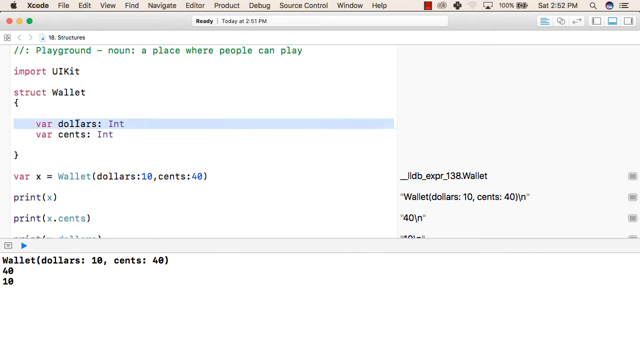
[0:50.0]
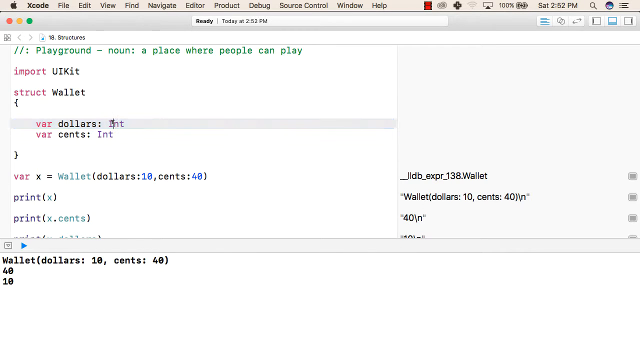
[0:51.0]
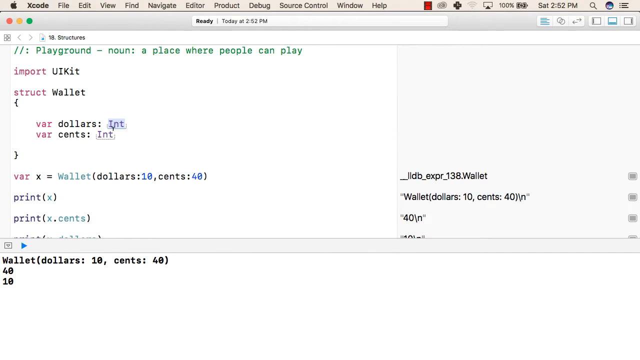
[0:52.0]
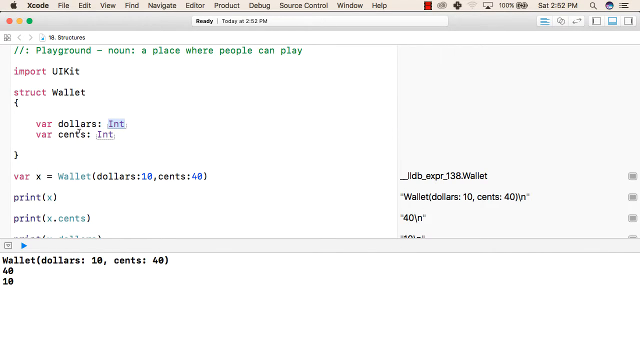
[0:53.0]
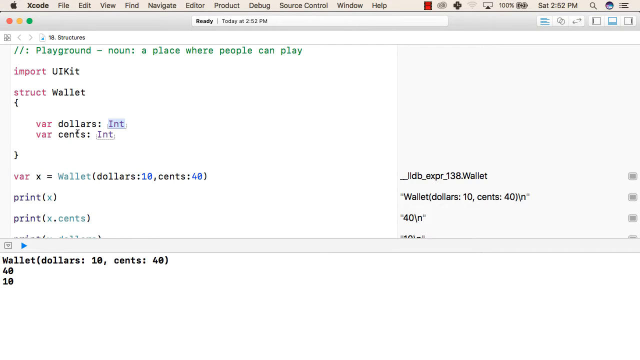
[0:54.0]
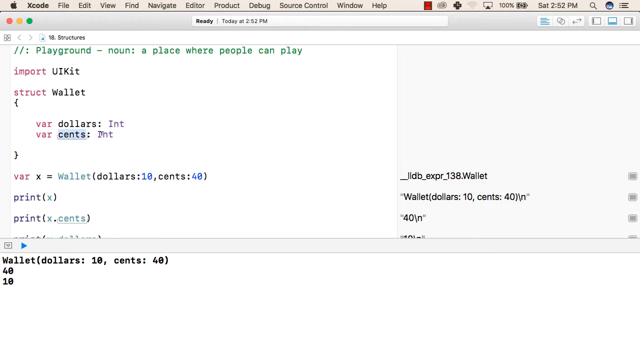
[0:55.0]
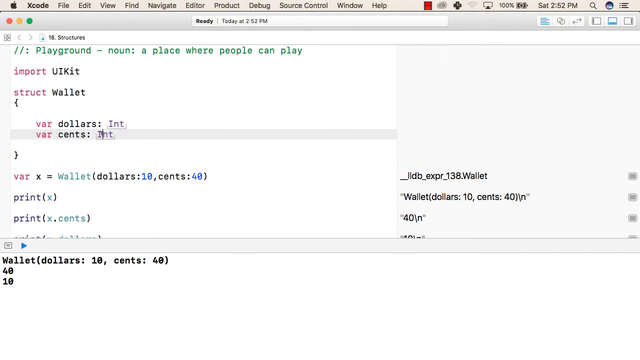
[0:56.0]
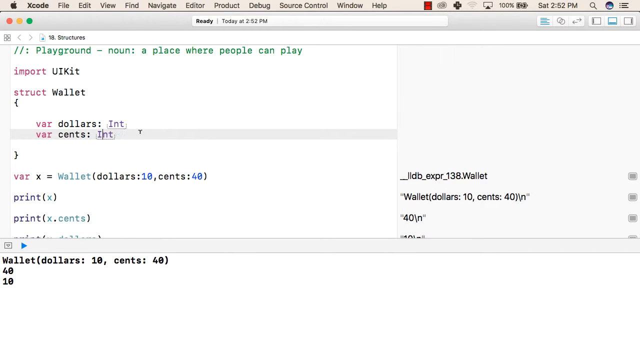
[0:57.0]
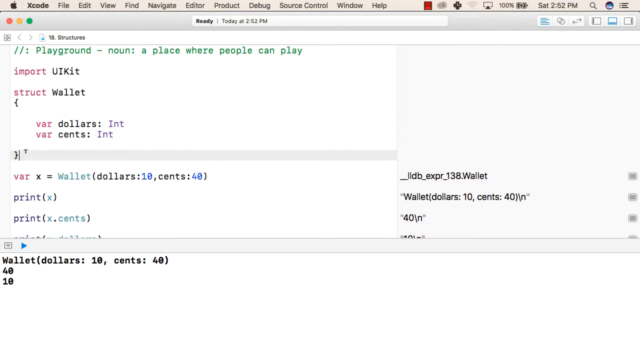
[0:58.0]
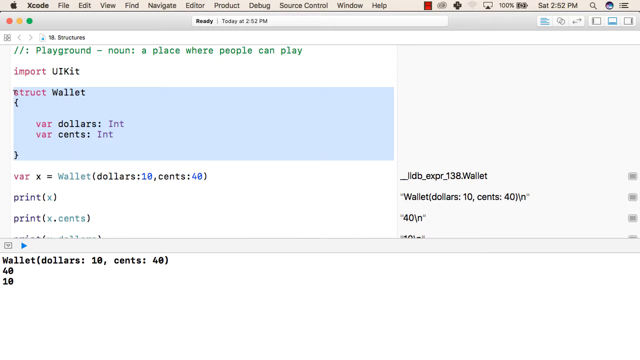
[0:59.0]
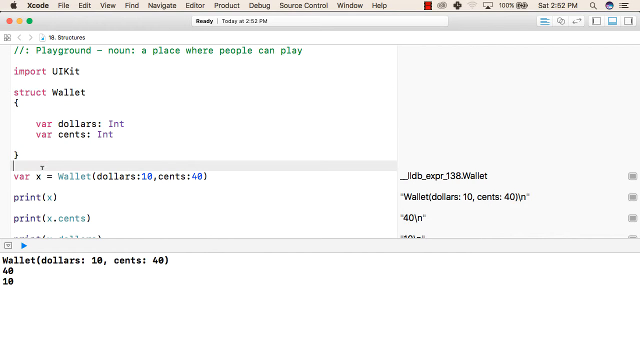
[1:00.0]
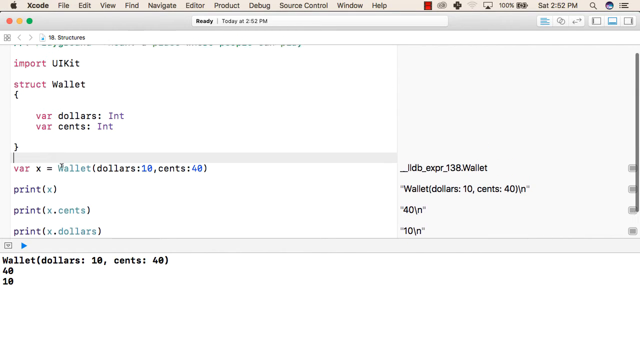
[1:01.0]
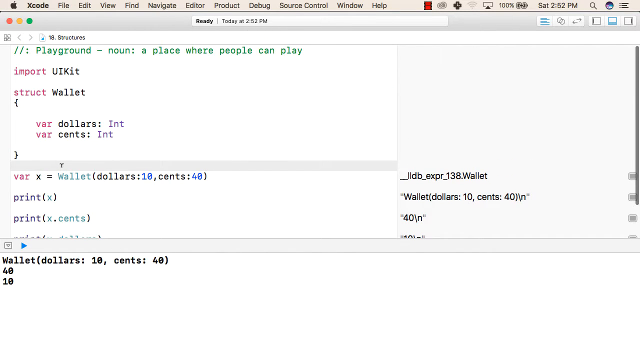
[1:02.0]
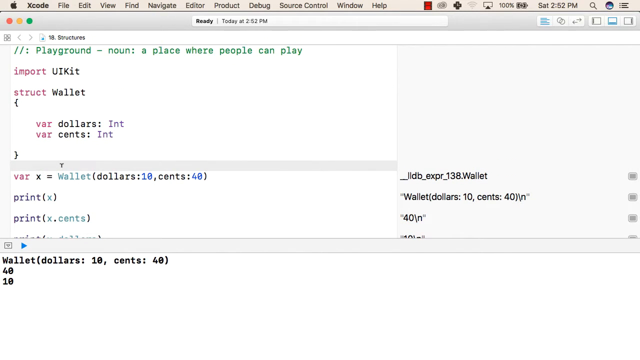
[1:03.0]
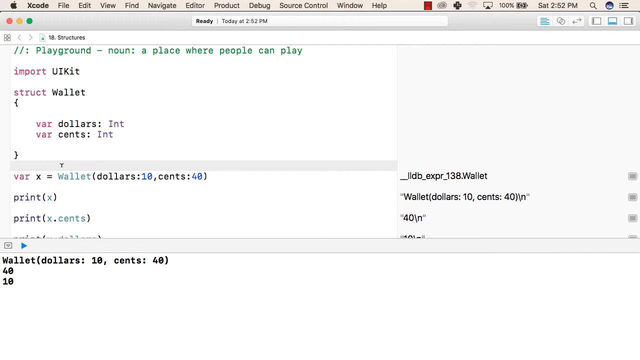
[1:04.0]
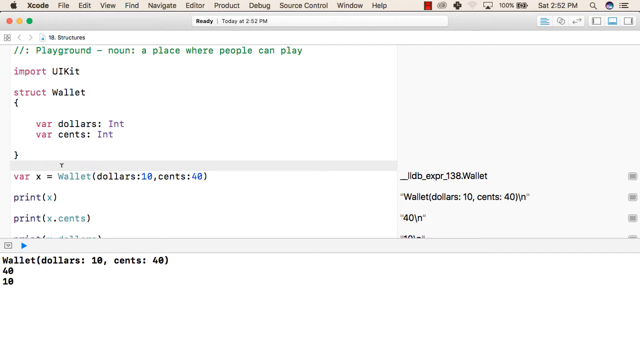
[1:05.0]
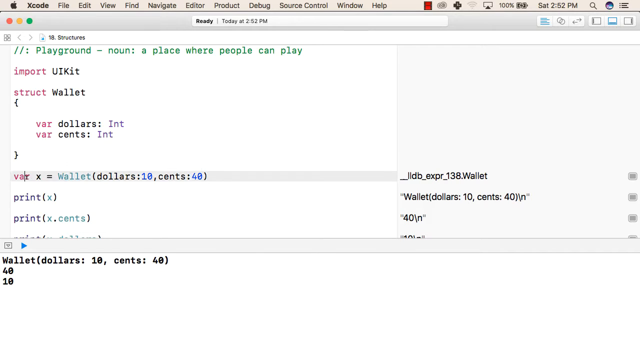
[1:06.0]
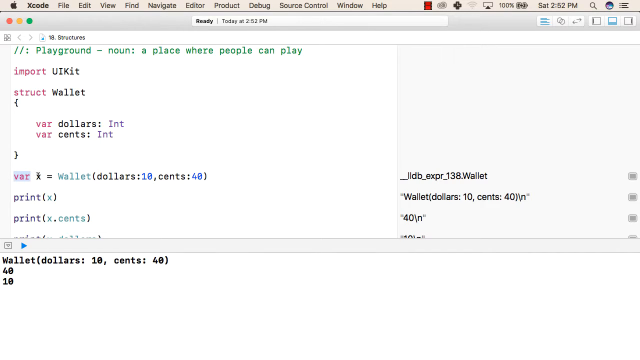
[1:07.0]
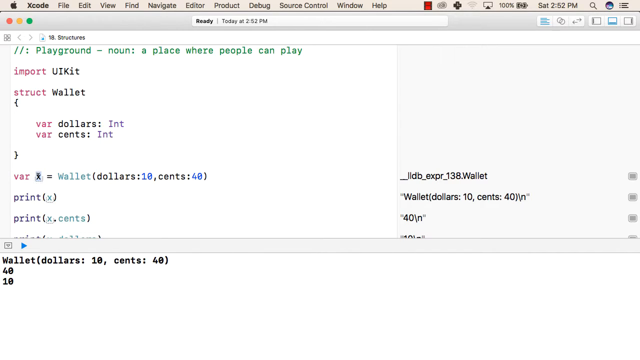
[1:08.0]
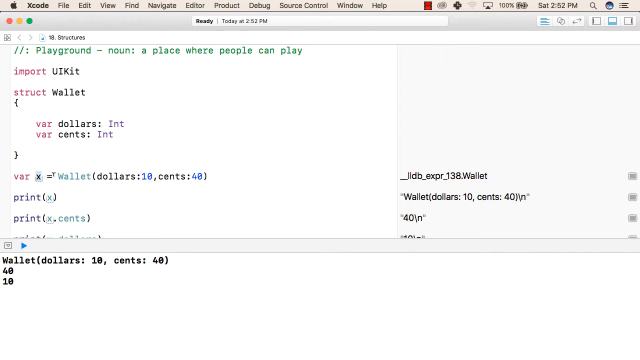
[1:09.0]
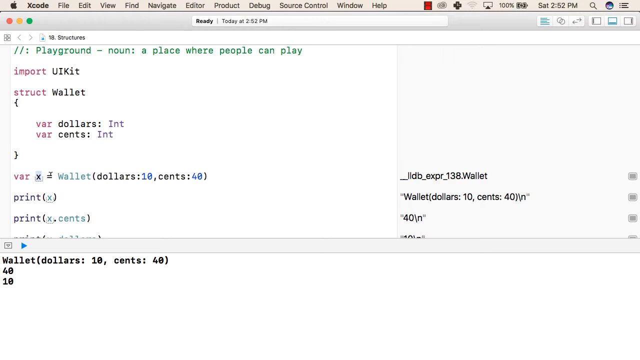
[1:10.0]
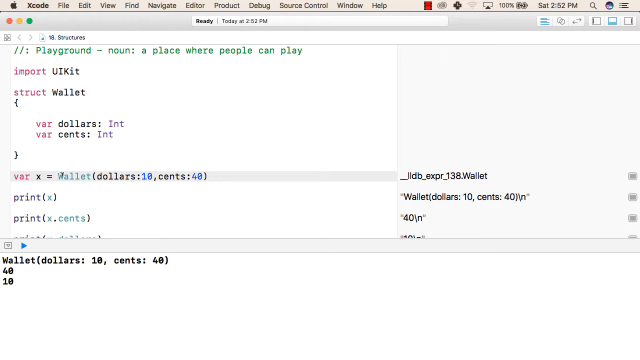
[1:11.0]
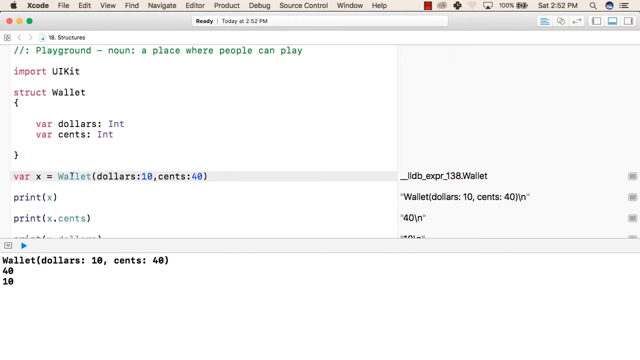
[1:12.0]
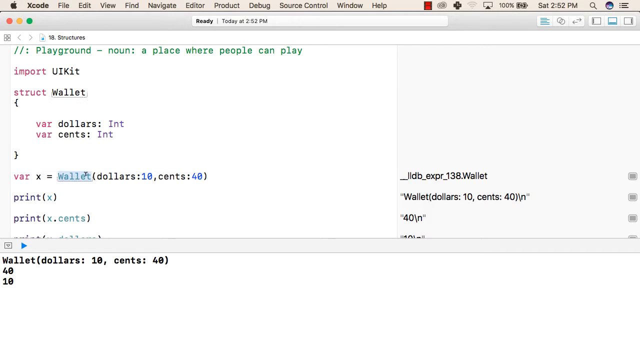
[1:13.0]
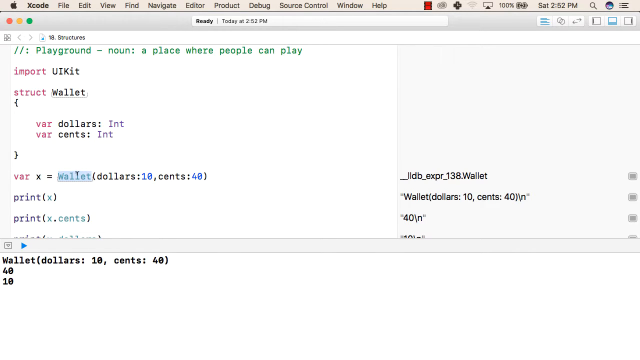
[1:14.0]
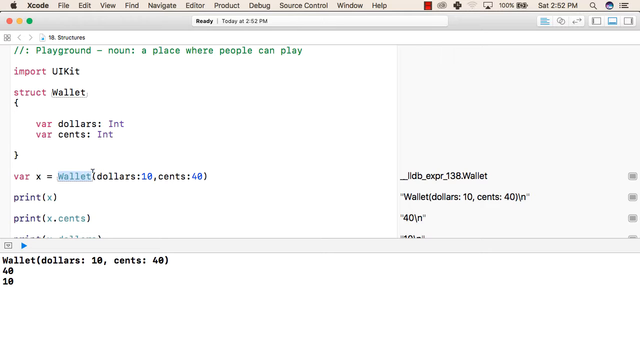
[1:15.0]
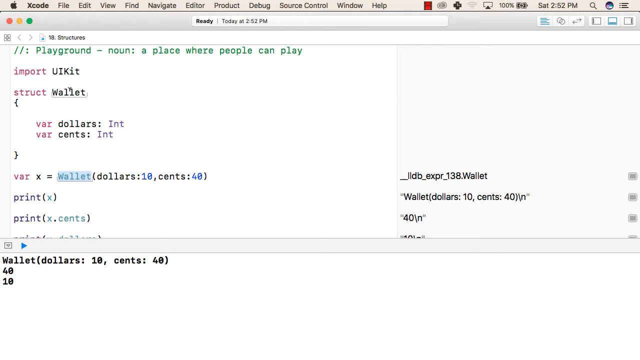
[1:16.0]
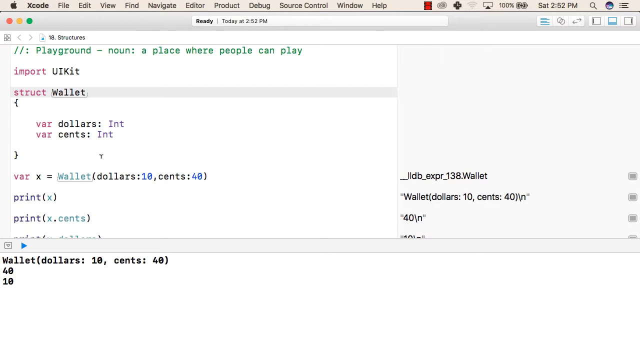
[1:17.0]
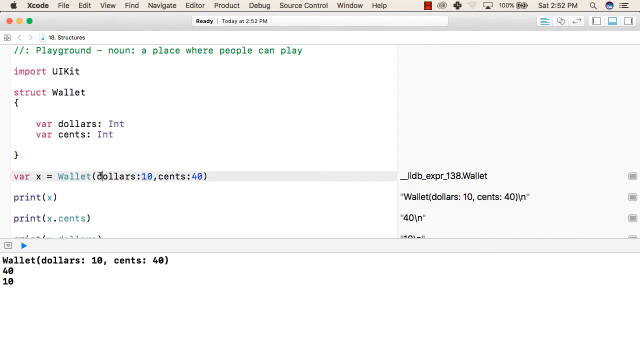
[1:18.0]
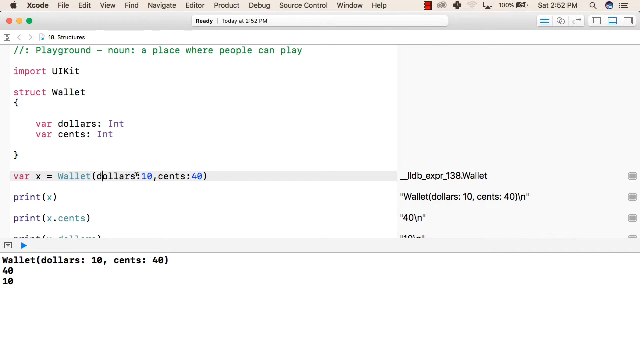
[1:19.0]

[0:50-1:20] Code appears on the left side of the screen, with a cursor hovering around parts of it and then highlighting some sections. It seems to be an Xcode page, since the text "Xcode" is visible at the top left beside an Apple logo. Other navigation sections are at the top of the screen, and the address bar includes the text "structures". The topmost part of the code reads "Playground - noun: a place where people can play". The code seems to involve payments, containing words like wallet, dollars and cents. The text "Int" also appears, possibly suggesting international payments. Values for dollars and cents are visible in parts of the code.